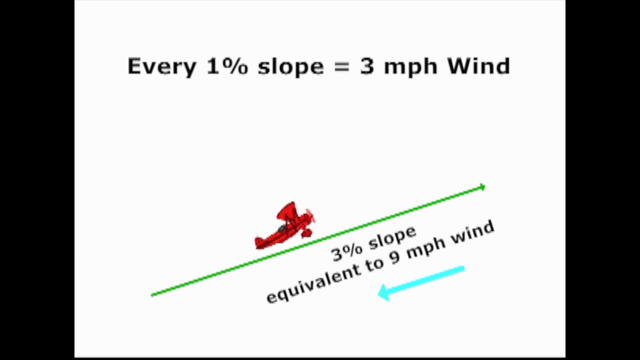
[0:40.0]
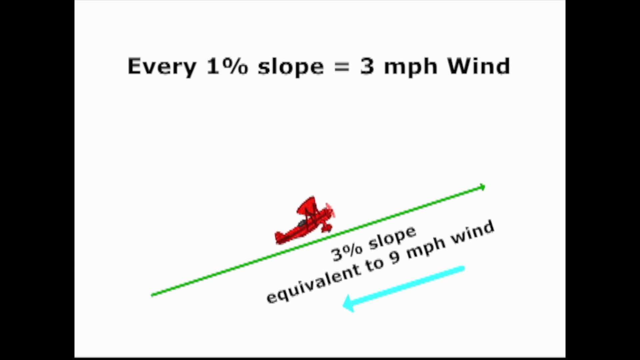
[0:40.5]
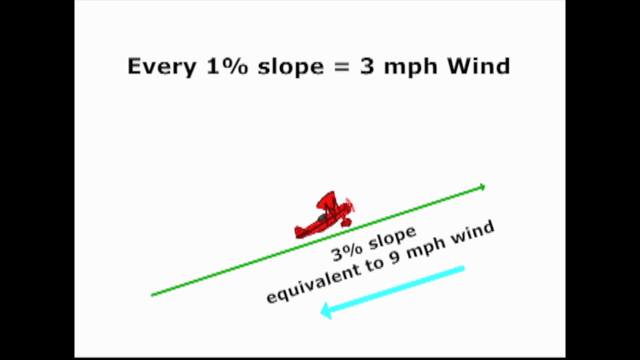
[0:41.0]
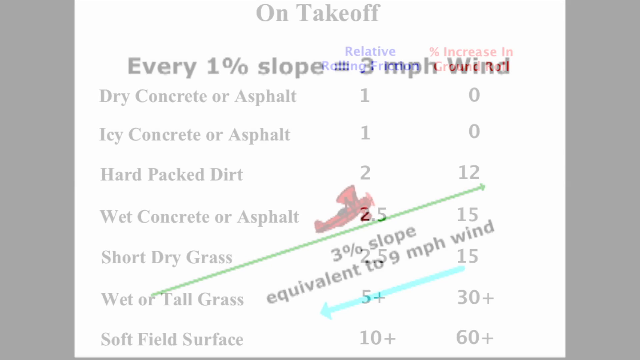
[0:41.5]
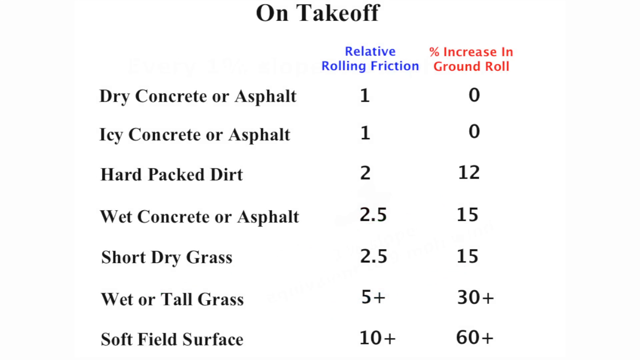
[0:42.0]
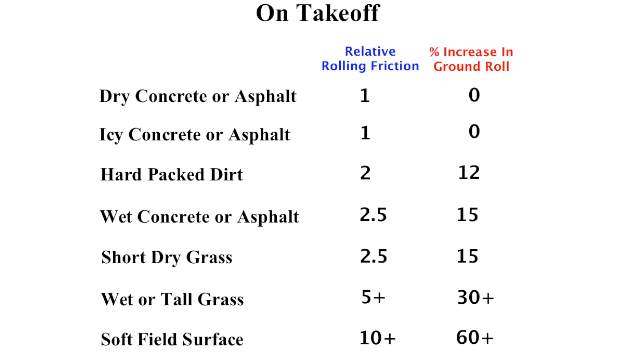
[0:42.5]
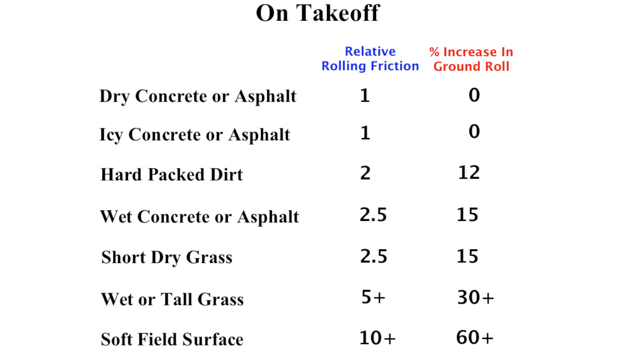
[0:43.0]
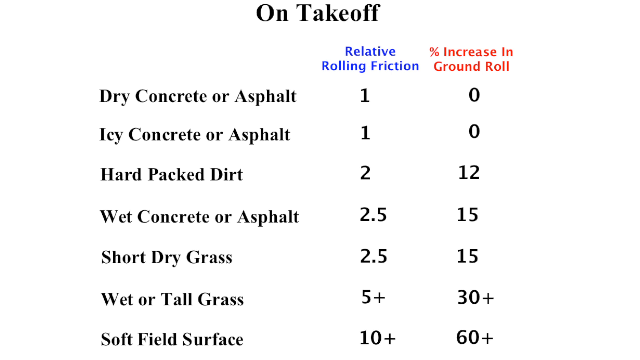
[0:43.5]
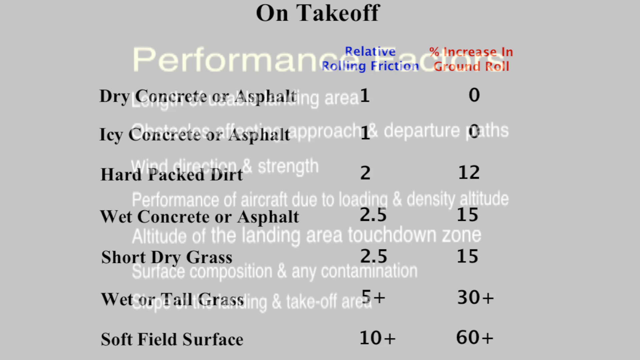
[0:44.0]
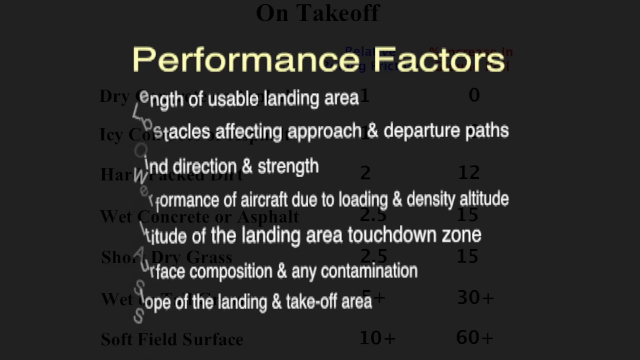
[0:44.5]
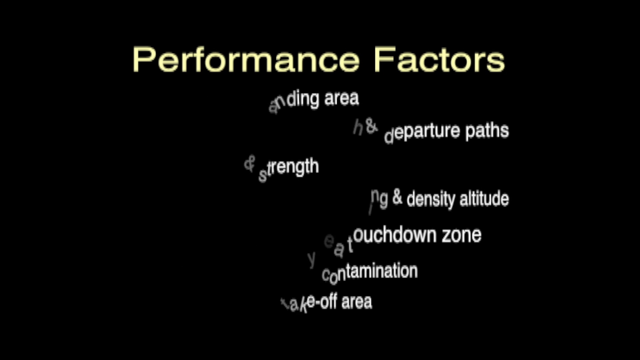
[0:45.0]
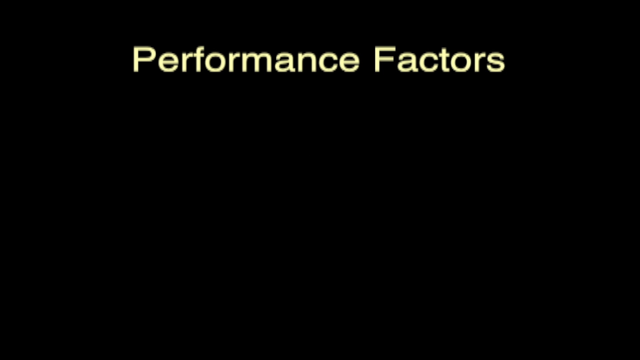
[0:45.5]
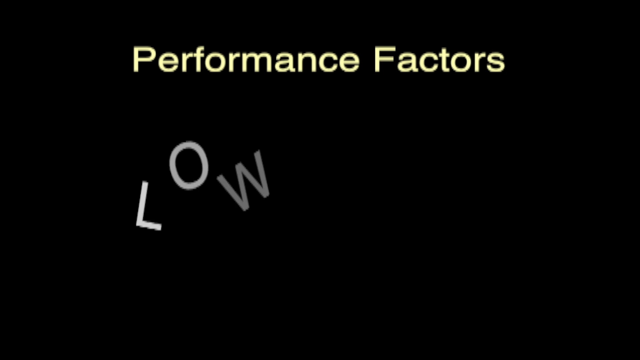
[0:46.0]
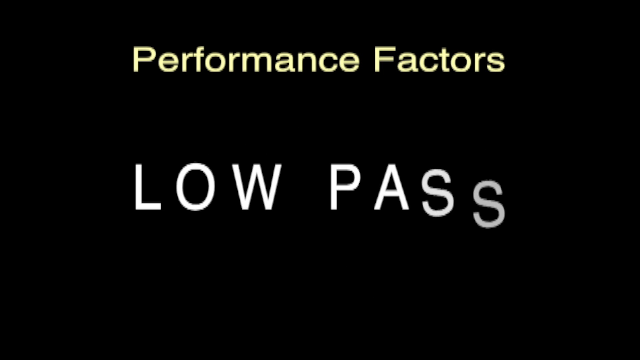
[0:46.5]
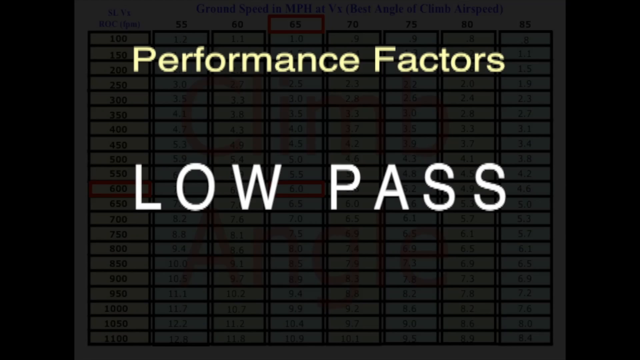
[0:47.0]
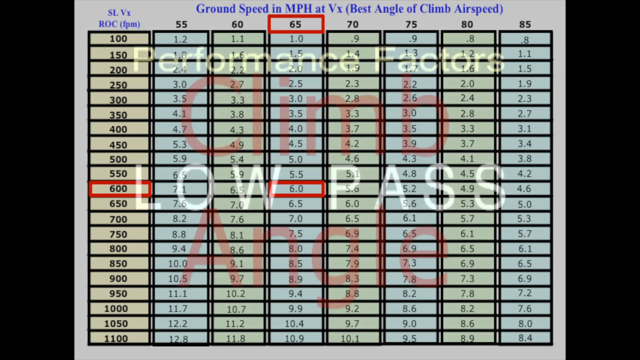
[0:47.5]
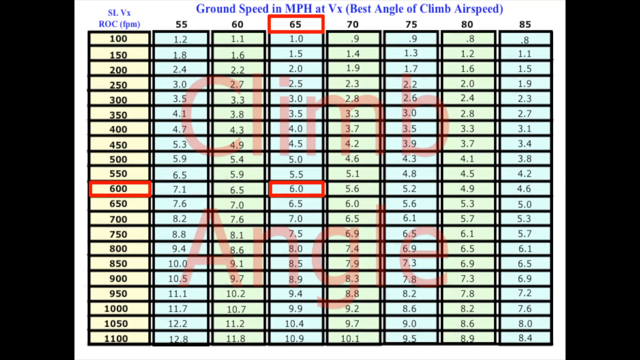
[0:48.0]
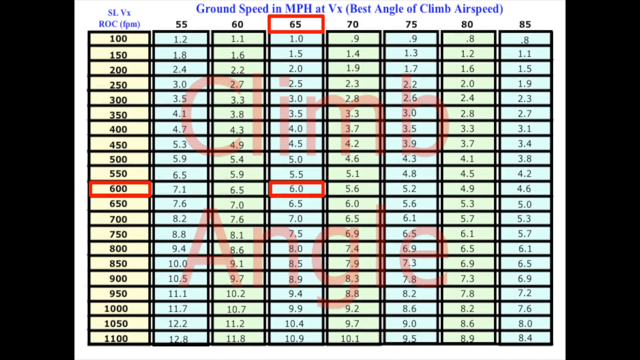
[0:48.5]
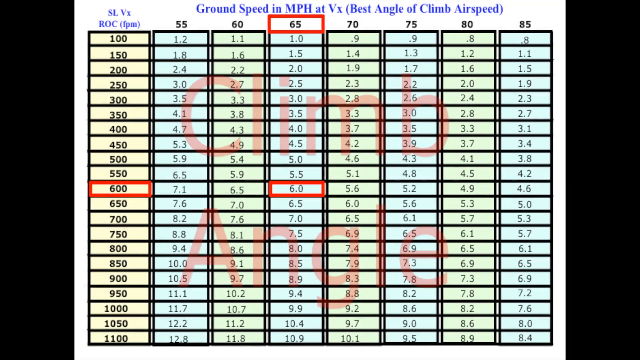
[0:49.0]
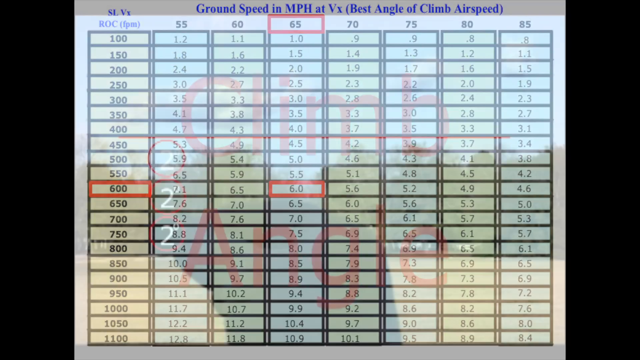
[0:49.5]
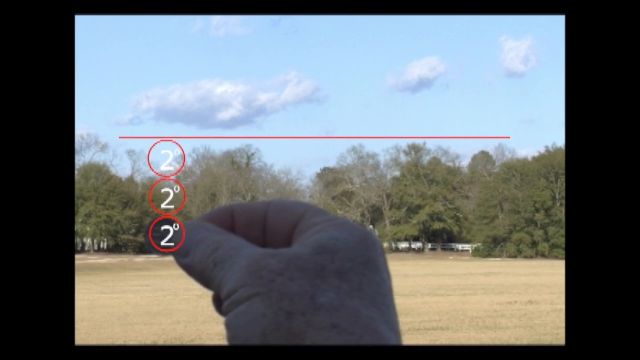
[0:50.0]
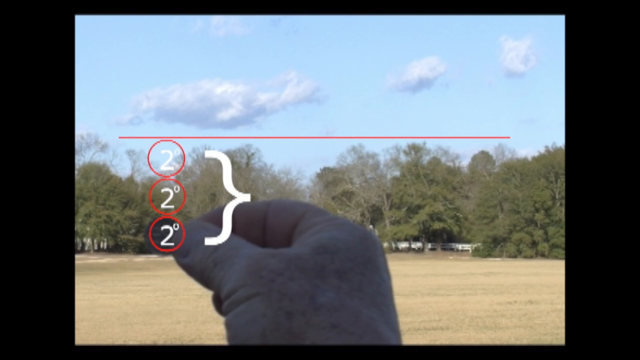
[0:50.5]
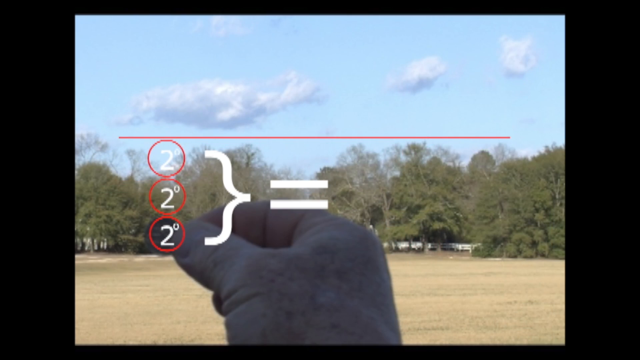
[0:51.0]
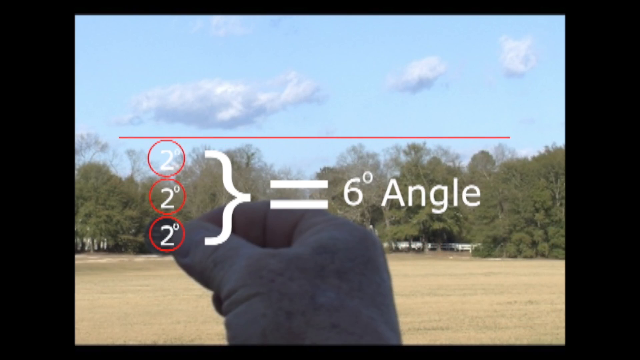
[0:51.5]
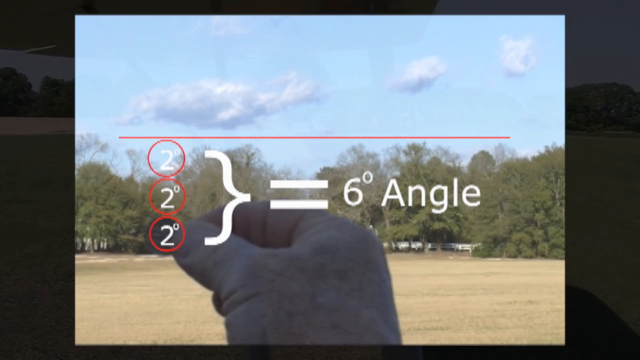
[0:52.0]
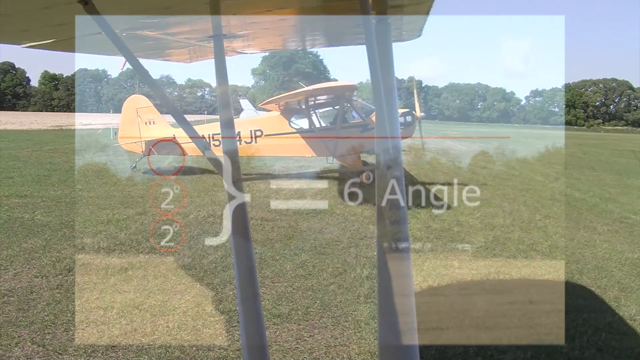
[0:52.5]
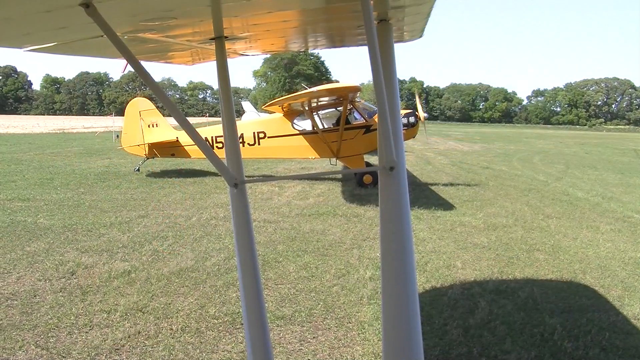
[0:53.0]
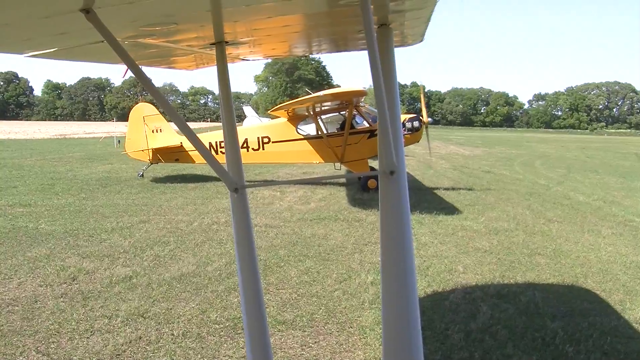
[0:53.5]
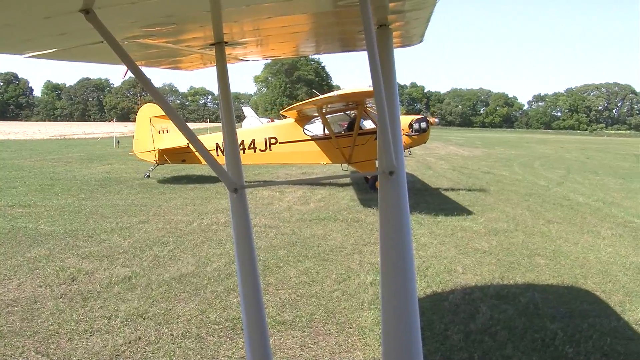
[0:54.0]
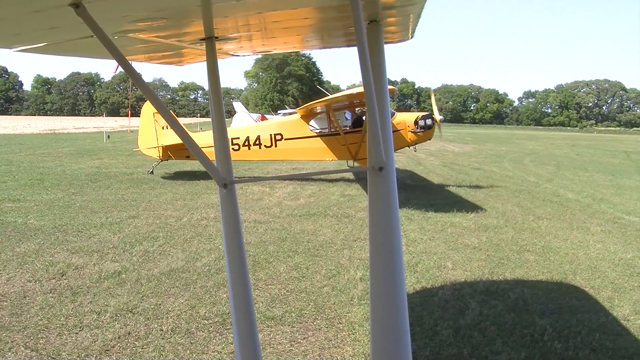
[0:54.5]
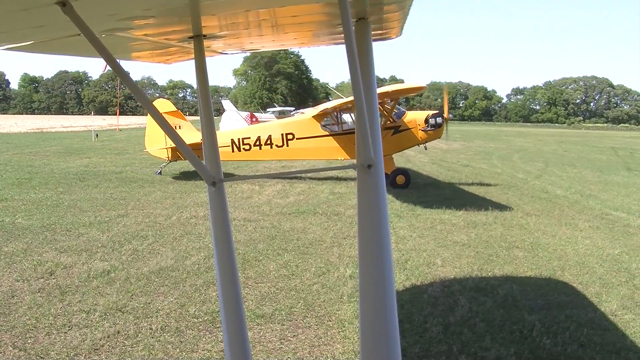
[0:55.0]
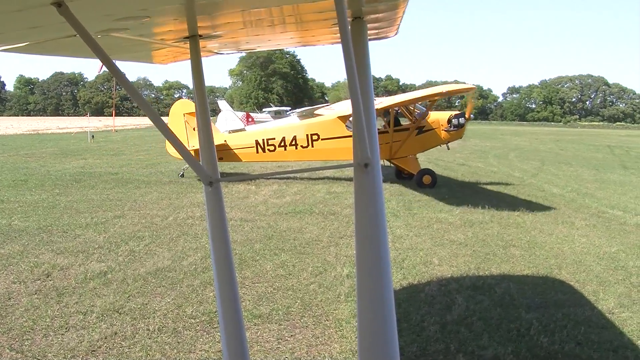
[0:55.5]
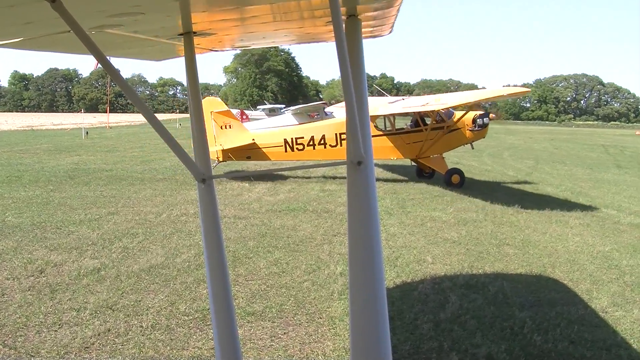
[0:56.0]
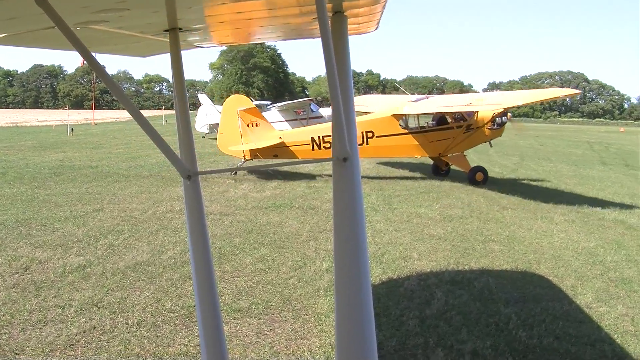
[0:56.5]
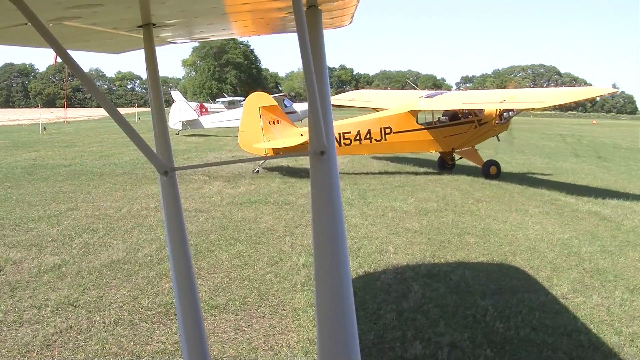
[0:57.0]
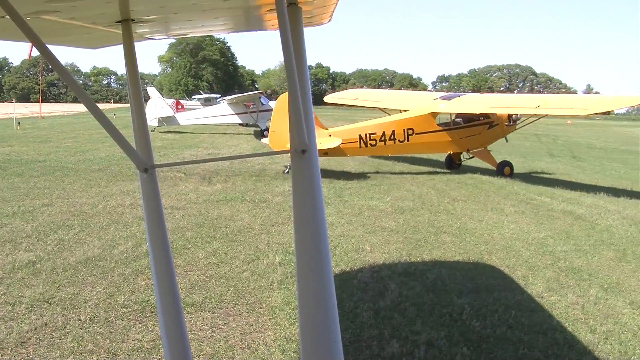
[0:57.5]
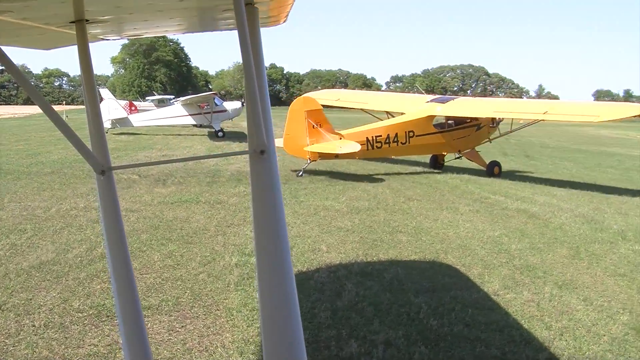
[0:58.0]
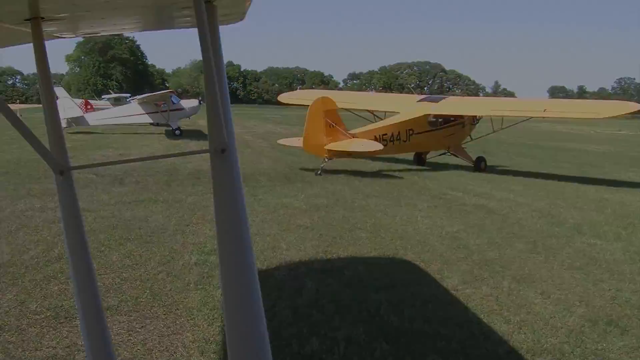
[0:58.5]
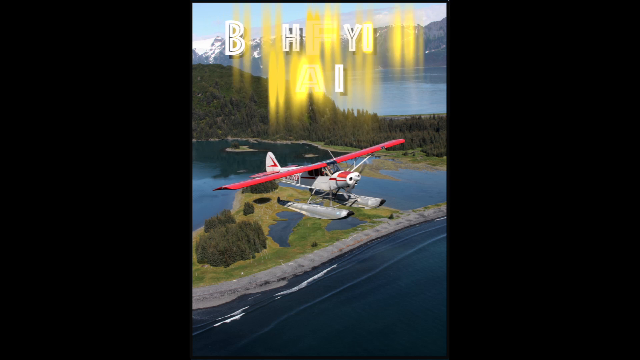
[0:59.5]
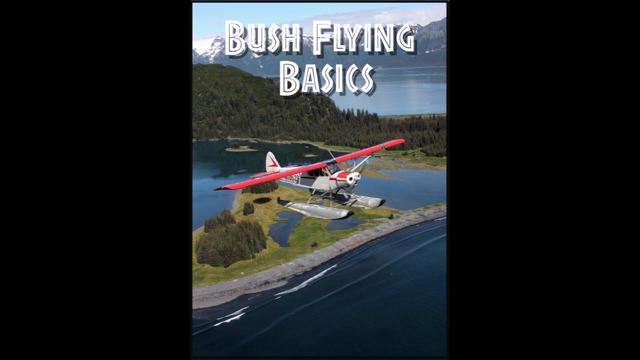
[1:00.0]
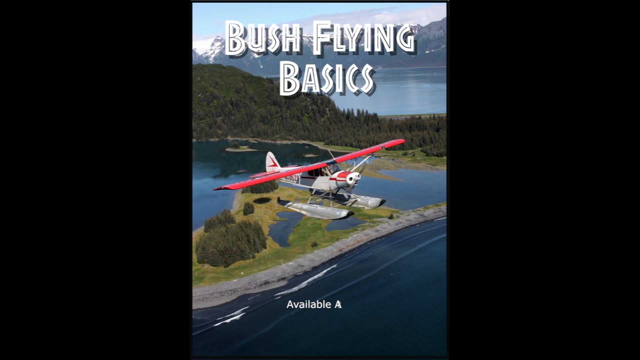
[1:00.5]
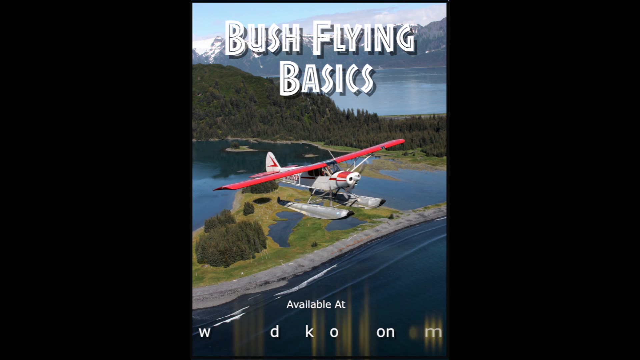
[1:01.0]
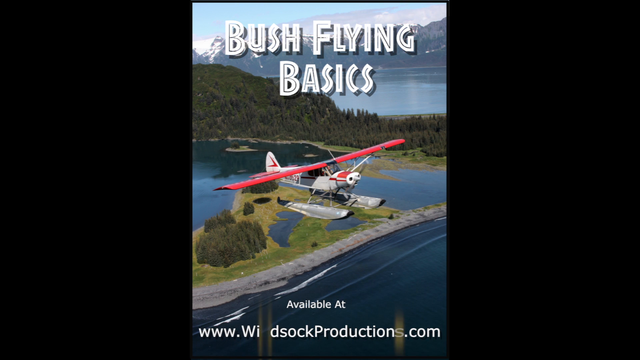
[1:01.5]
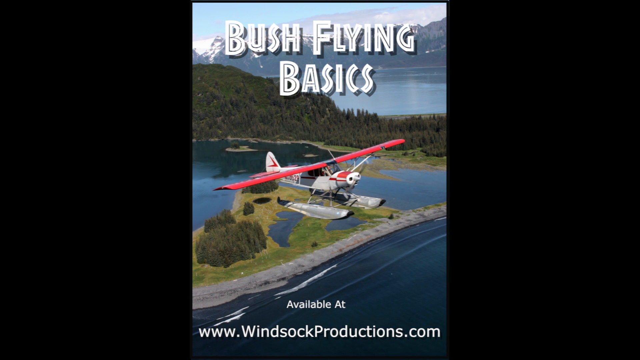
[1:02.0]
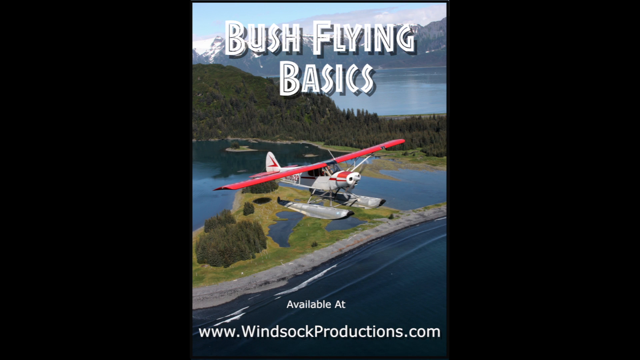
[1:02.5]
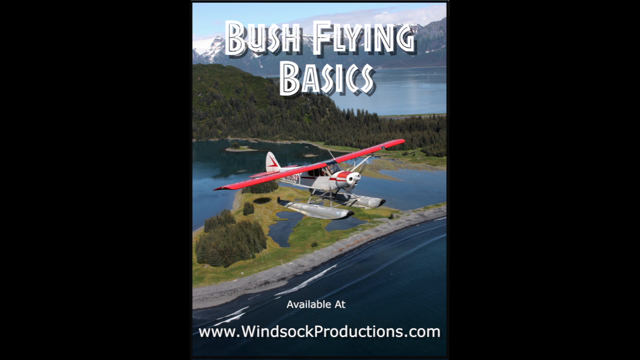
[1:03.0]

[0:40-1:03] A readout says "on takeoff," with one column labeled "relative rolling friction" and the next "percentage increase in ground roll." It lists different terrains: dry concrete or asphalt, icy concrete or asphalt, hard-packed dirt, wet concrete or asphalt, short dry grass, wet or tall grass, and soft field surface. More text then says "performance factors low pass," and a chart says "ground speed in MPH at VX," showing different ground speeds from 55 to 85, paired with a column on the left side that says "ground speed in MPH." Next, someone's gloved hand appears with the thumb and pointer finger together, and it shows 2% or 2 degrees equals a 6-degree angle. A different yellow plane then starts to taxi out on the runway. A new image shows a plane flying over scenery of lakes and mountains with snow, trees and hills. One of the planes with the pontoon landing gear is seen again, and text says the video is available at Windsock Productions.